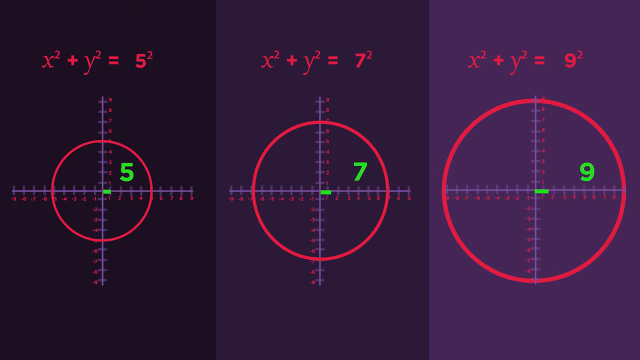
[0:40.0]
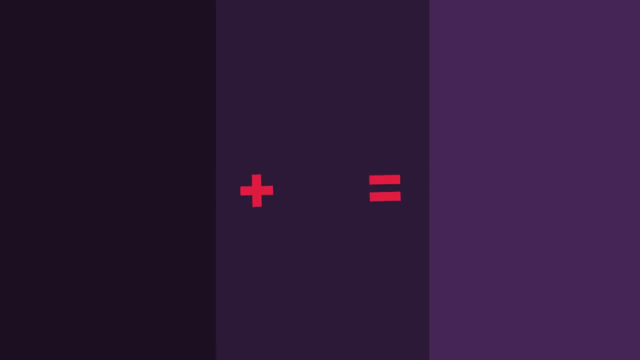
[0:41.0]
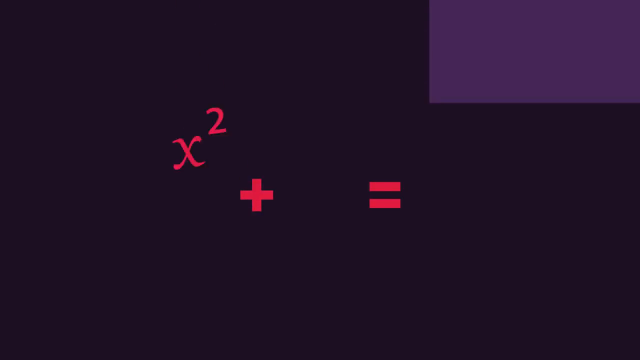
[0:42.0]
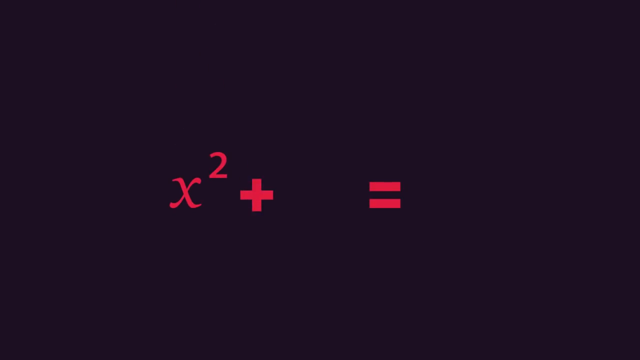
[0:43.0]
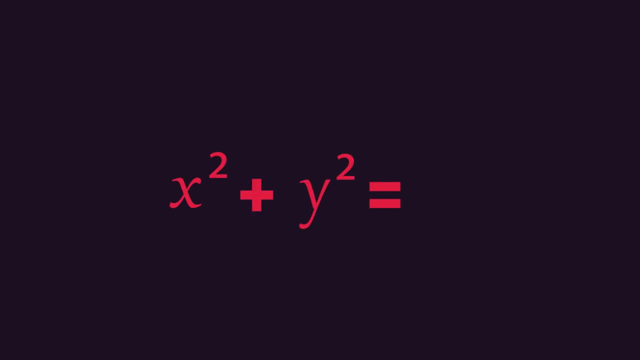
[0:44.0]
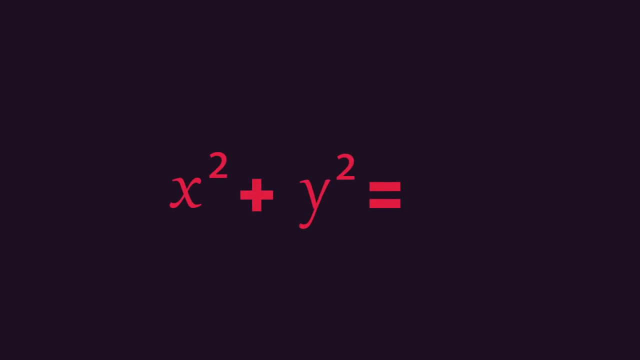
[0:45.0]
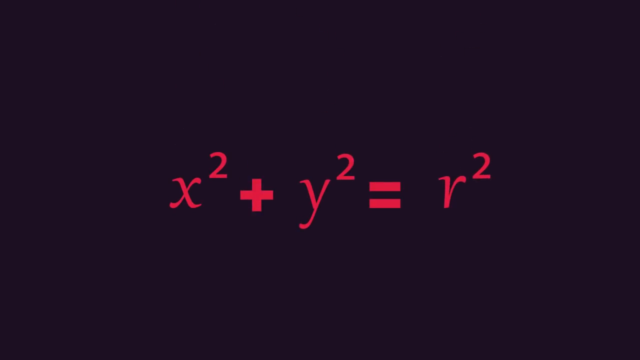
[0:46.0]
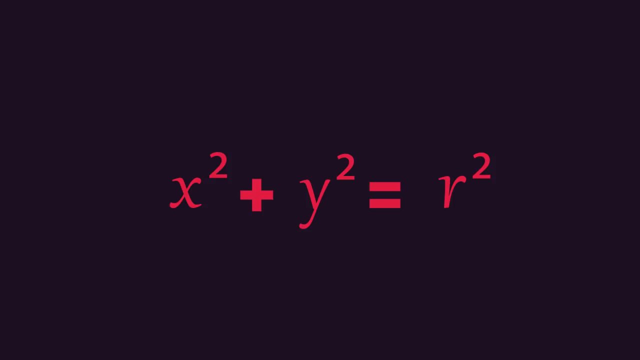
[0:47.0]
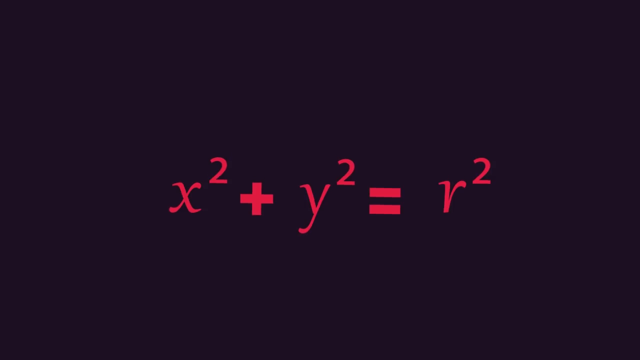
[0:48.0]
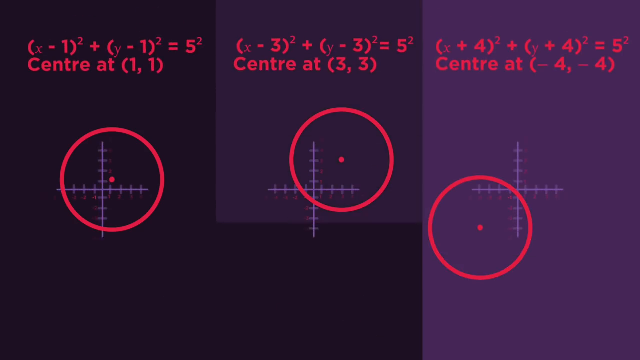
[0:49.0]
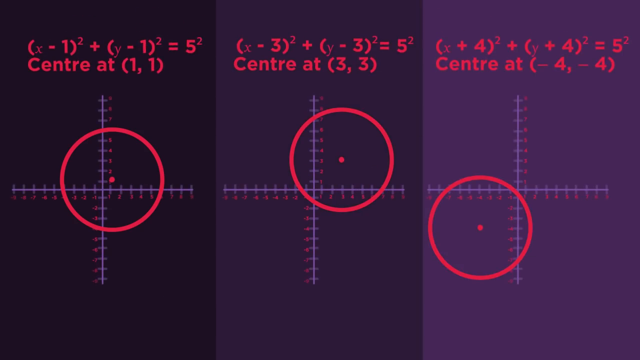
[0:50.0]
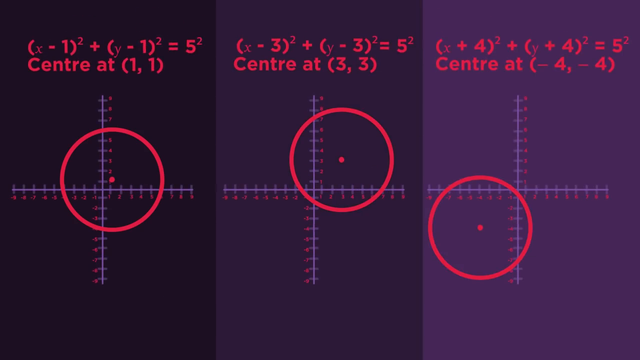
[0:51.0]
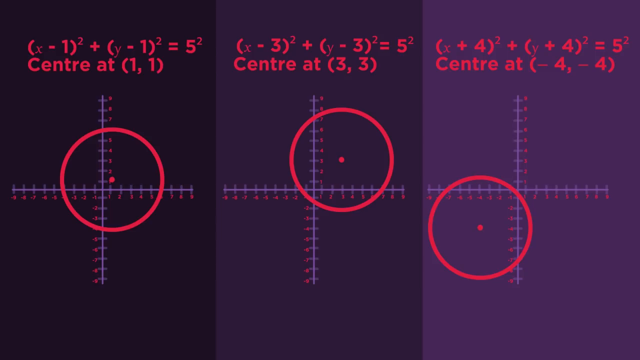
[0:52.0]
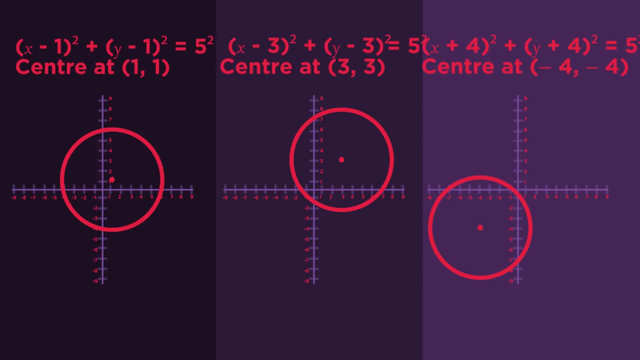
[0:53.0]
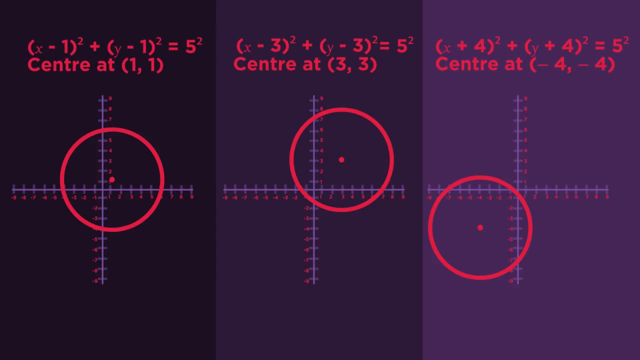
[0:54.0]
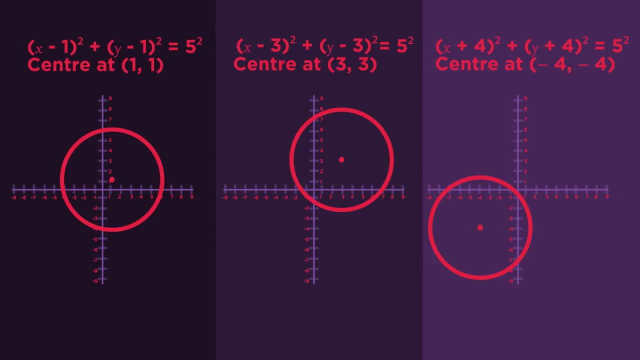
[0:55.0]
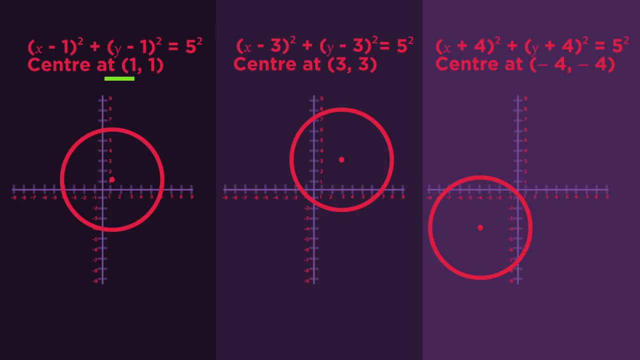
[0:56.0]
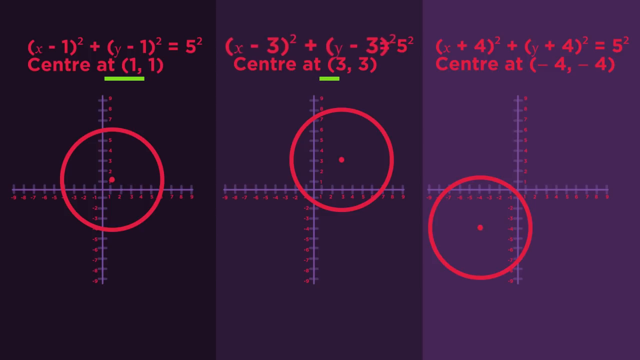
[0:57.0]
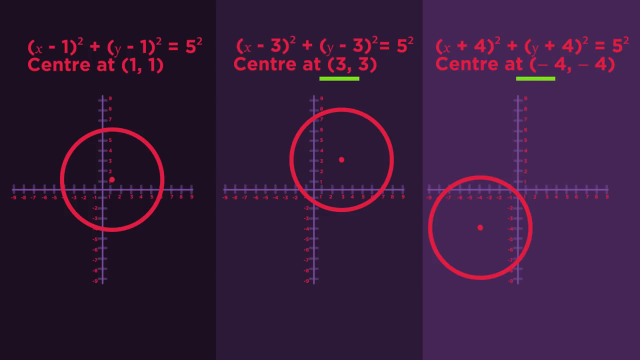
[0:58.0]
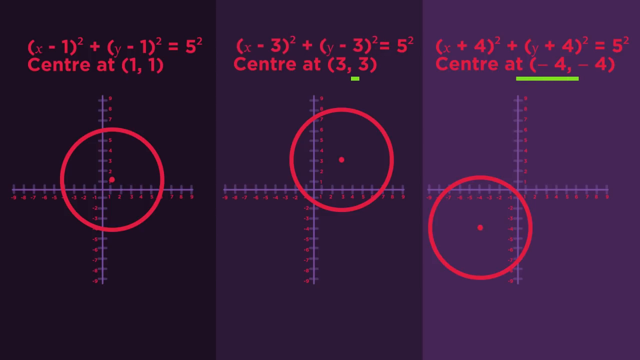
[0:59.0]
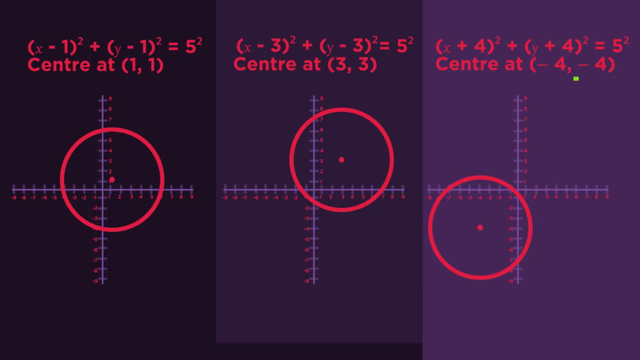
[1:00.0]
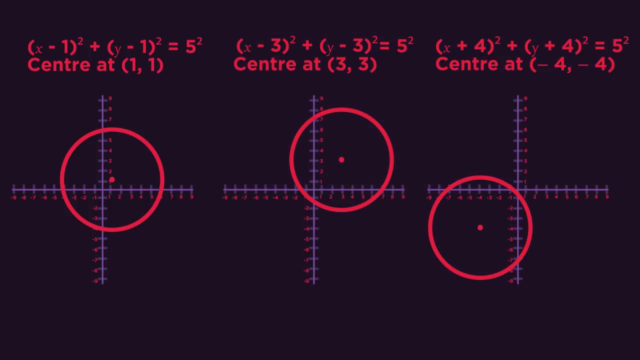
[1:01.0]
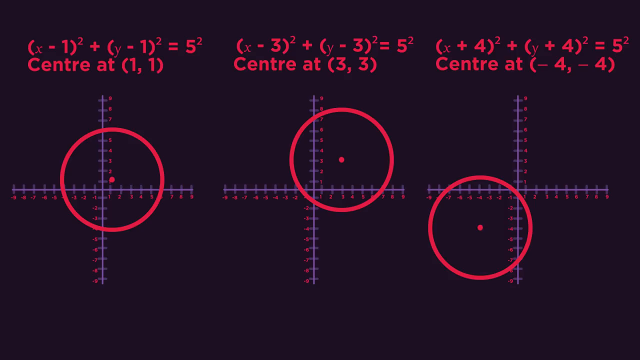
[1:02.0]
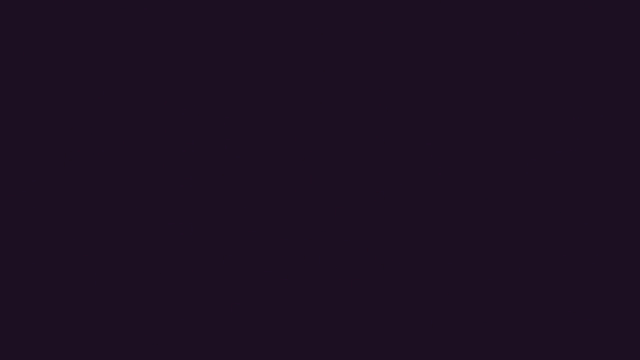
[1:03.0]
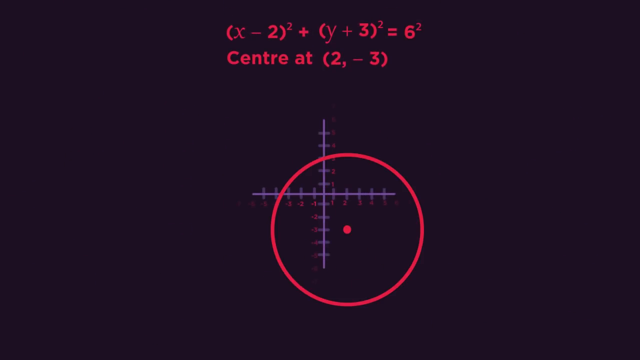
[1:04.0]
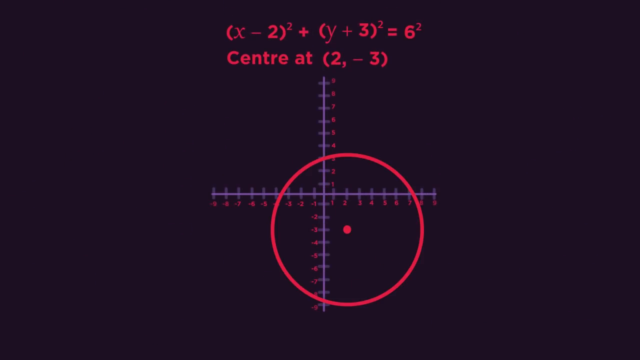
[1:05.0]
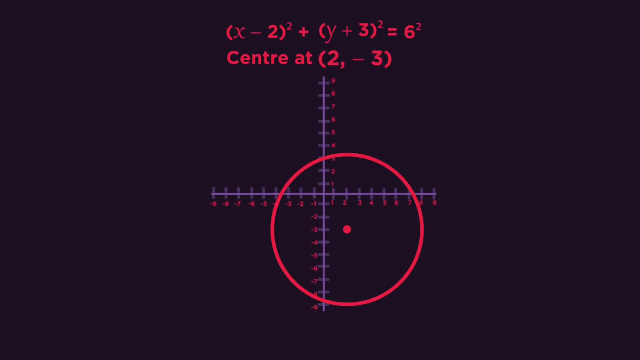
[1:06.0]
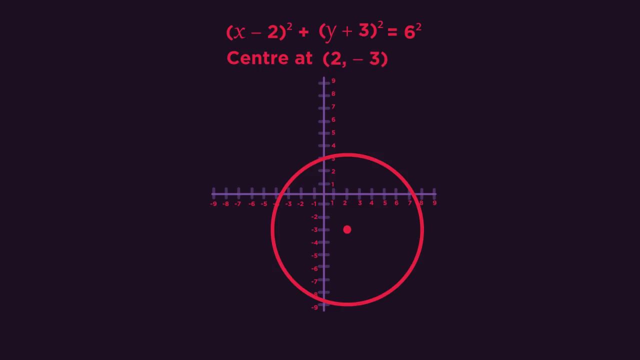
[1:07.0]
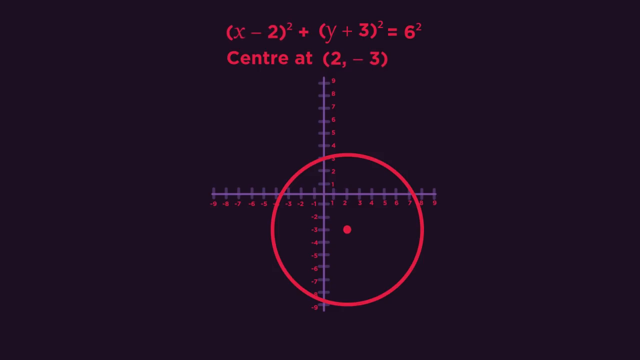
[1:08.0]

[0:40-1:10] The three circles drop off the screen, and on a dark background x² + y² = r² appears, r being the radius of the circle. Graphs then show circles moving around: red circles with a red dot in the middle move to (1, 1), to (3, 3) and to (-4, -4) on the xy-axis. There are three rows of circles, each with a calculation showing the equation for its center point: (x − 1)² + (y − 1)² = 5² for center (1, 1), (x − 3)² + (y − 3)² = 5² for center (3, 3), and (x + 4)² + (y + 4)² for center (-4, -4). A green line appears under each center point to indicate what was used. The center point then changes to (2, -3), and a red circle with a red dot is placed at that point on the graph.